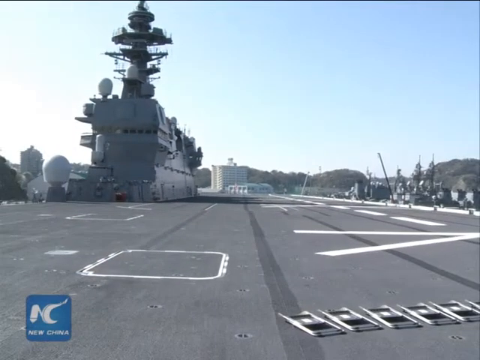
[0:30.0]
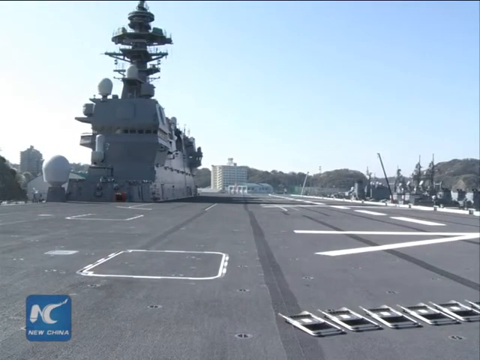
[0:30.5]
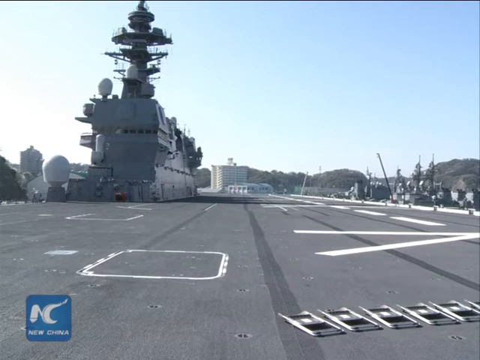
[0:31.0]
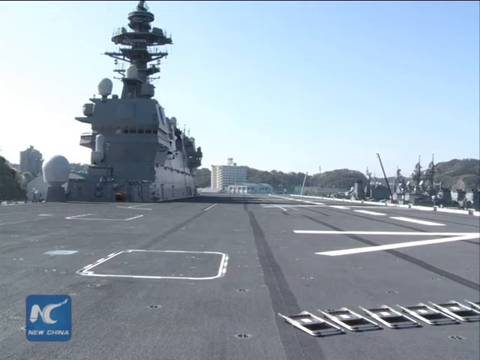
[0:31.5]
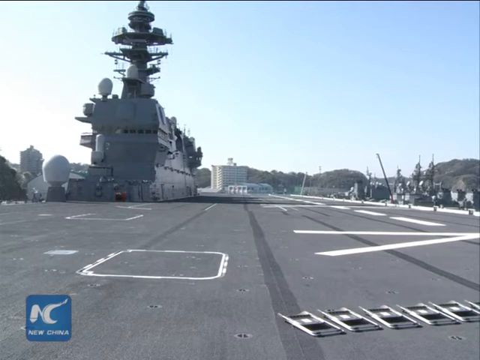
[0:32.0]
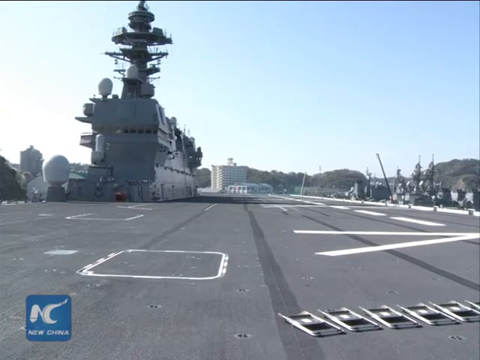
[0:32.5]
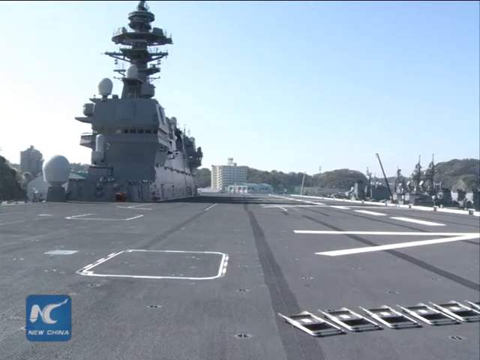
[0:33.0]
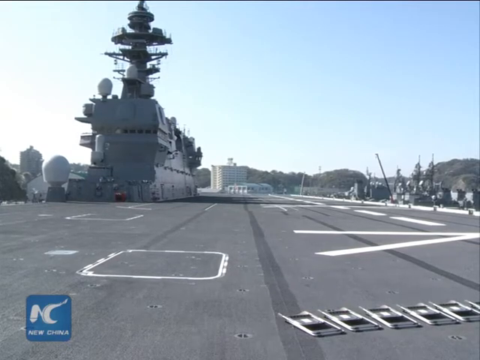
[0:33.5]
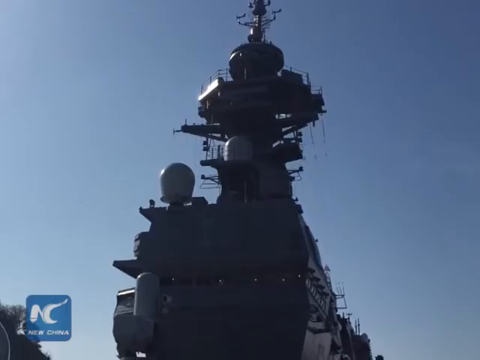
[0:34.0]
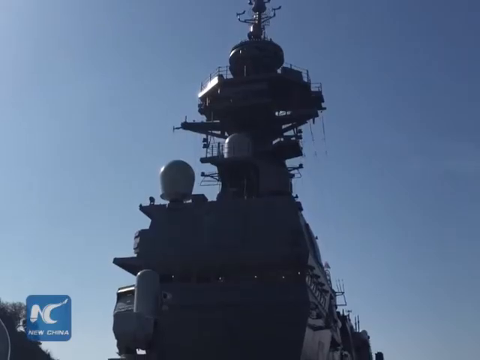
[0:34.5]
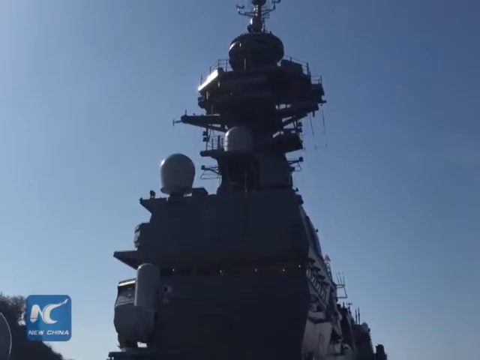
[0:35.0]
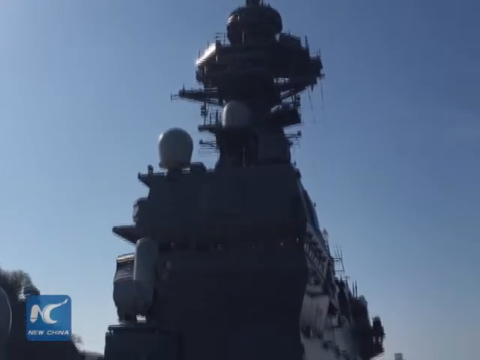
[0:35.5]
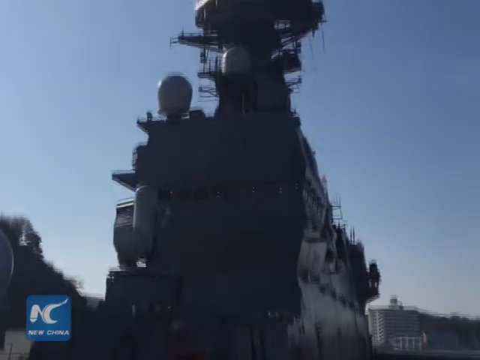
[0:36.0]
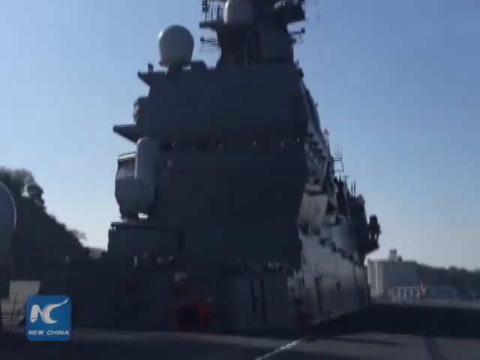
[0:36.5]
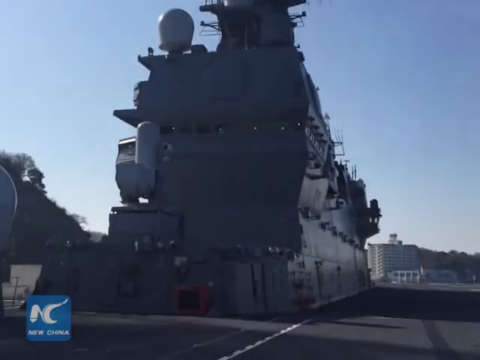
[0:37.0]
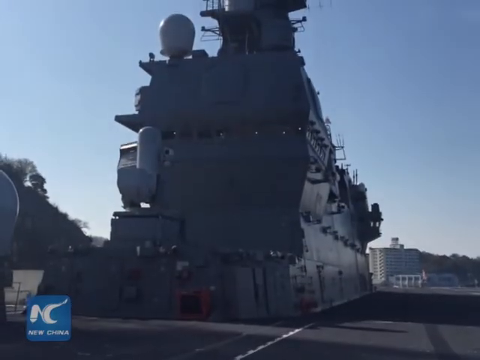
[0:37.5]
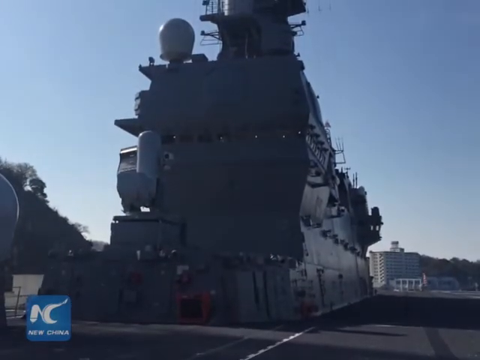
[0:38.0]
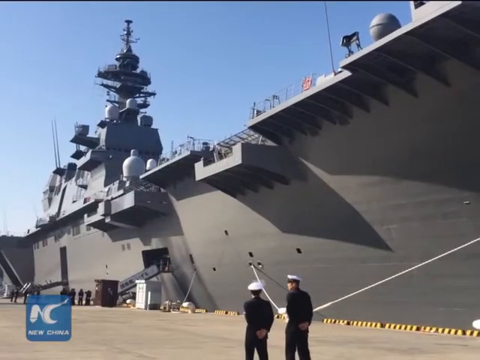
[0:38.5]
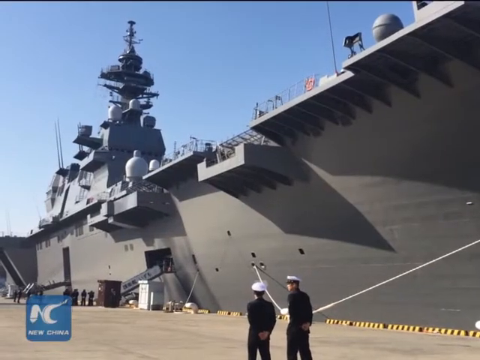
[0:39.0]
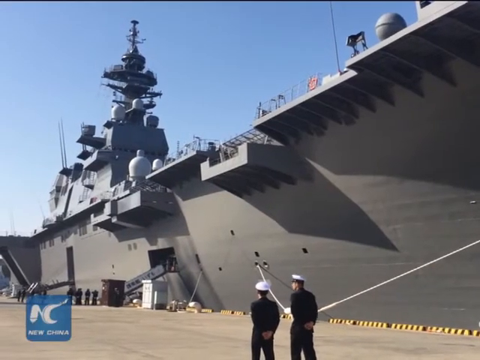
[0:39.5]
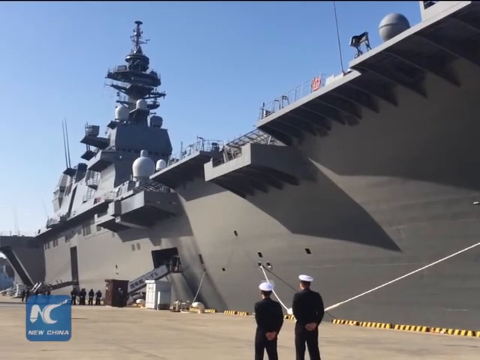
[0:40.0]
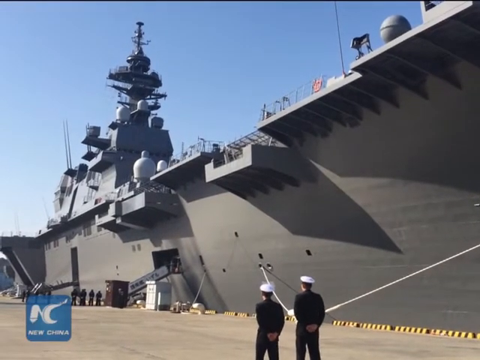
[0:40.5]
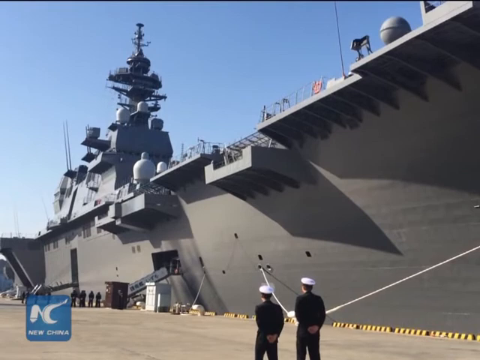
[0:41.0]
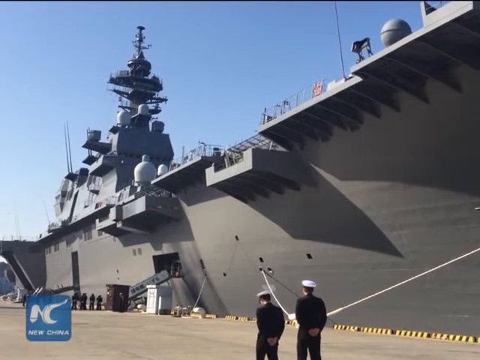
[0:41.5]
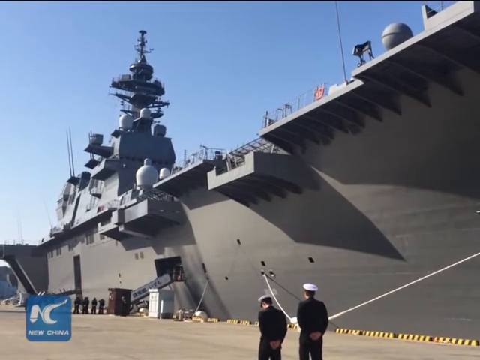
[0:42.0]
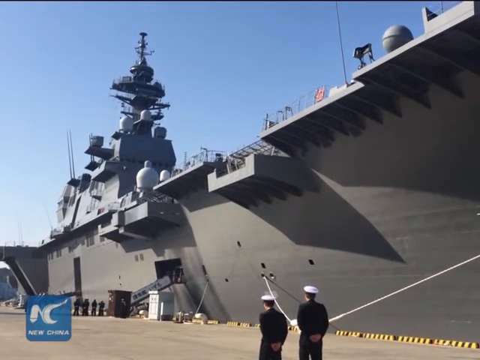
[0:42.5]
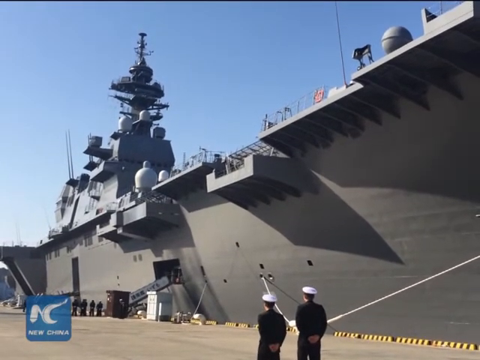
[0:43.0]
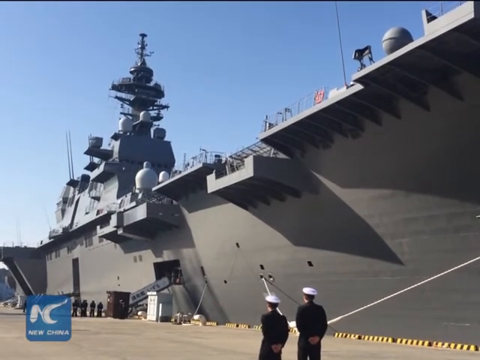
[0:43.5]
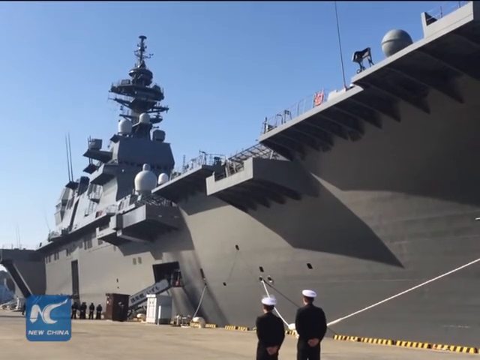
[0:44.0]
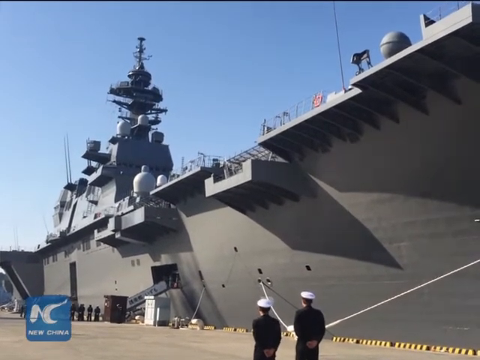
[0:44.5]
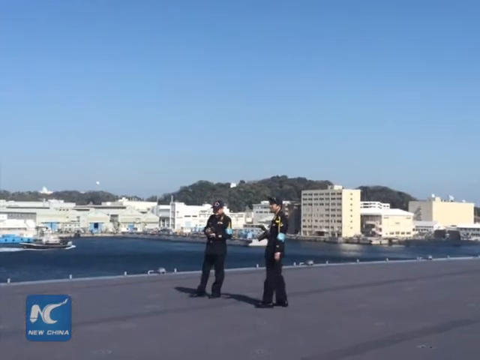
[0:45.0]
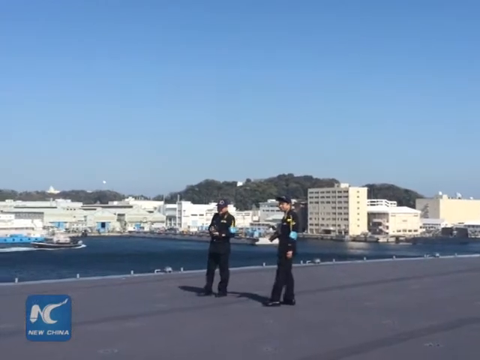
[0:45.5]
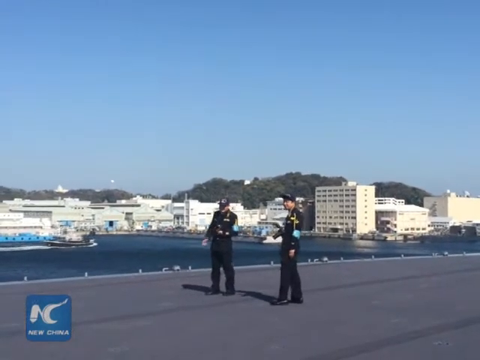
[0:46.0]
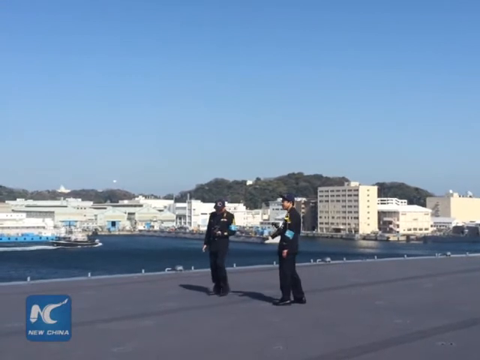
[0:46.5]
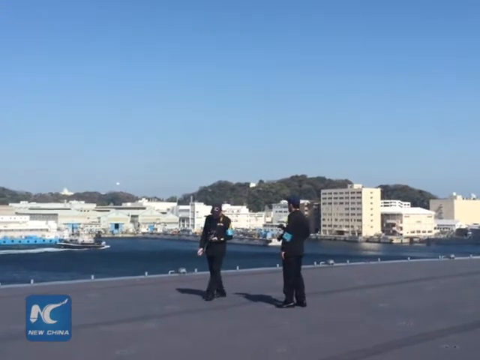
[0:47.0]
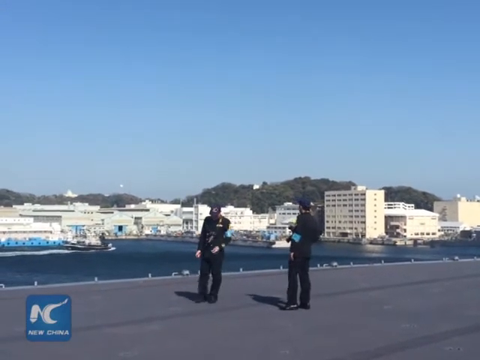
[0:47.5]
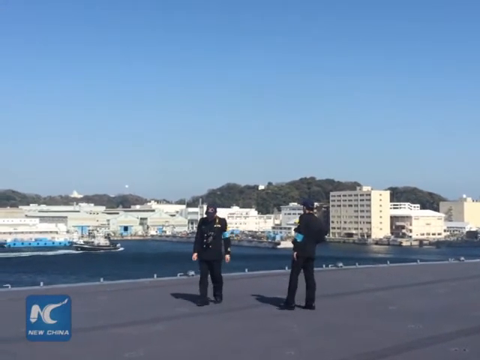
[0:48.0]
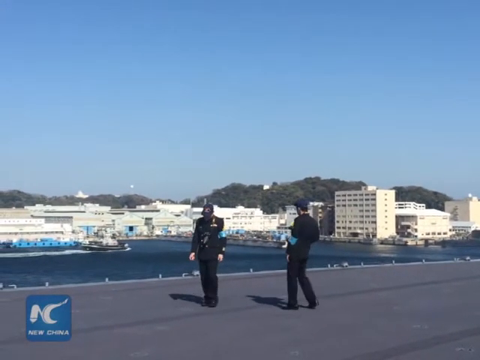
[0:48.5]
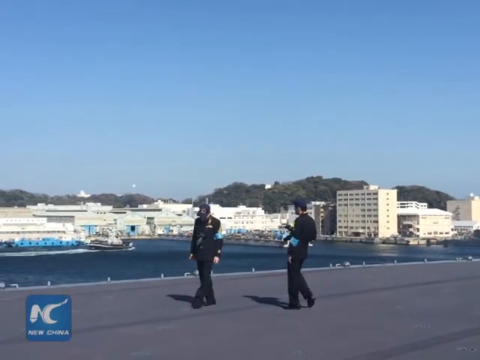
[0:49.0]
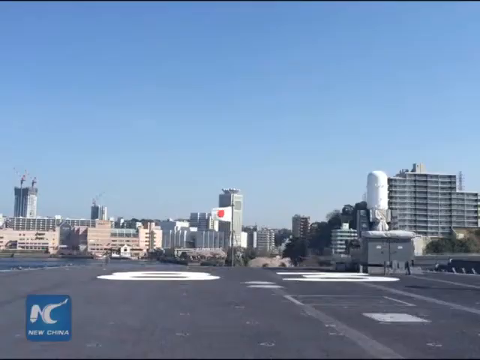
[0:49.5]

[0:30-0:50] The scene remains at the naval yard, now on the deck of a battleship within a massive shipyard. Two Japanese naval men, apparently admirals of the Japanese Navy, stand looking at the massive battleship, which is painted gray. A couple of officers stand on the platform atop the ship. A Japanese flag waves in the background, and the skies above are clear and free of clouds on a sunny day. Other boats are out on the marina, and many buildings of various kinds are in the background. There does not appear to be much wind, with the flags sort of waving at higher elevations. Many smaller boats in the marina chug along behind the battleships; it is unclear whether they are naval or civilian vessels.